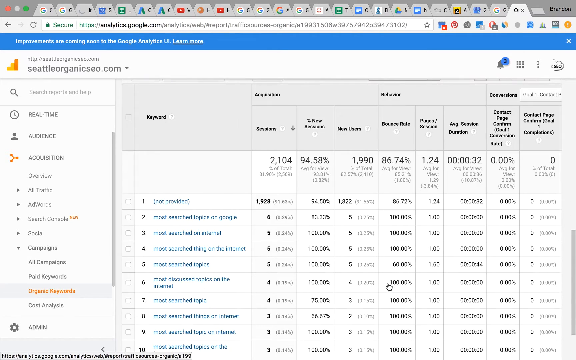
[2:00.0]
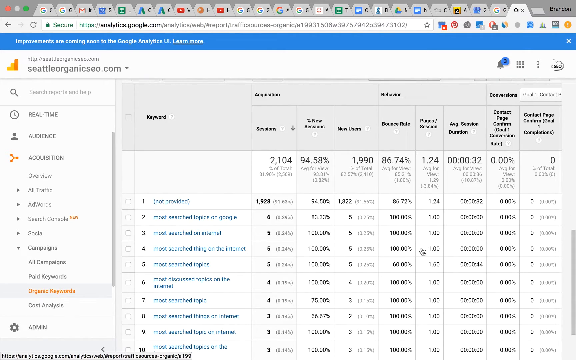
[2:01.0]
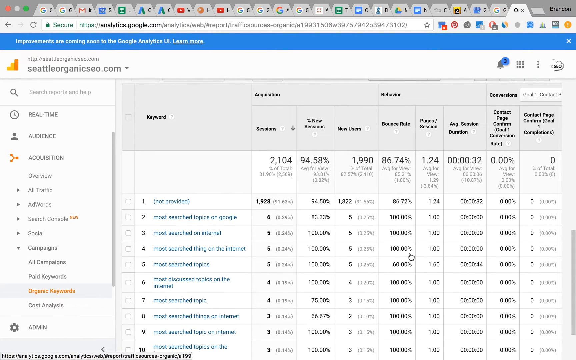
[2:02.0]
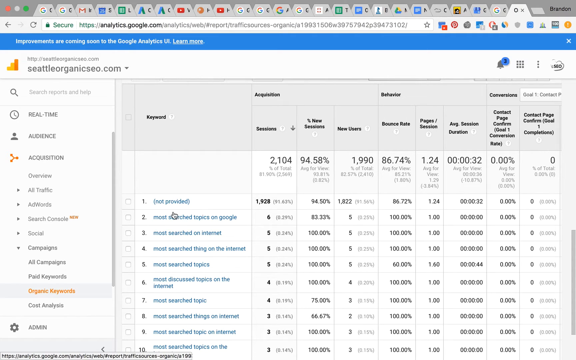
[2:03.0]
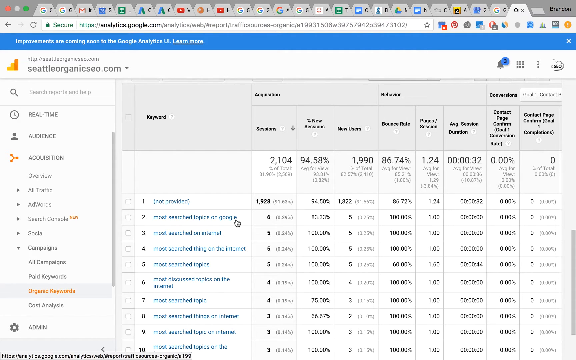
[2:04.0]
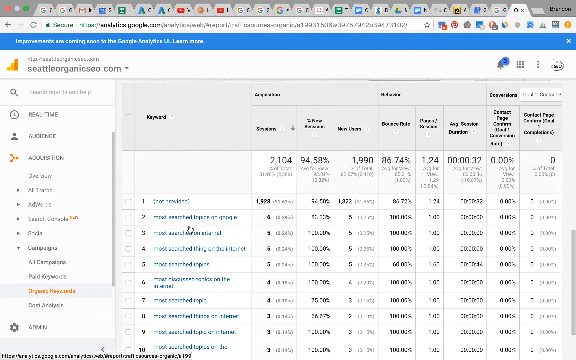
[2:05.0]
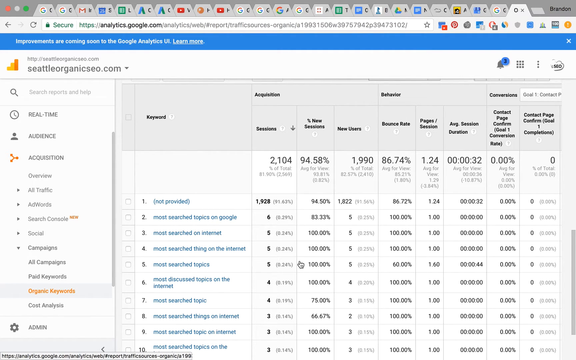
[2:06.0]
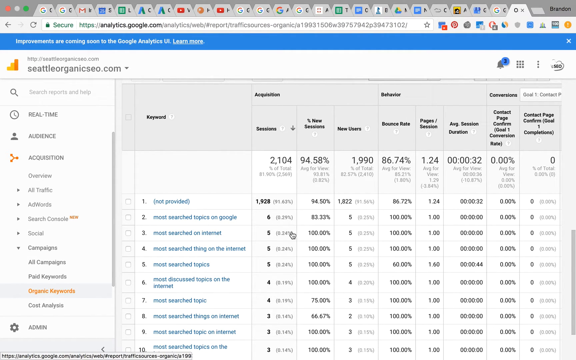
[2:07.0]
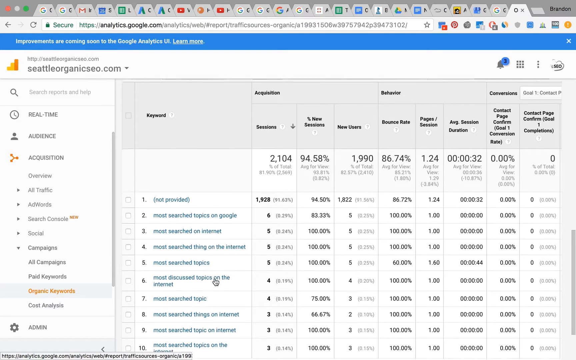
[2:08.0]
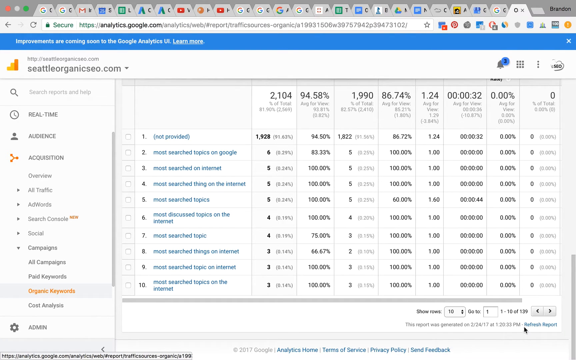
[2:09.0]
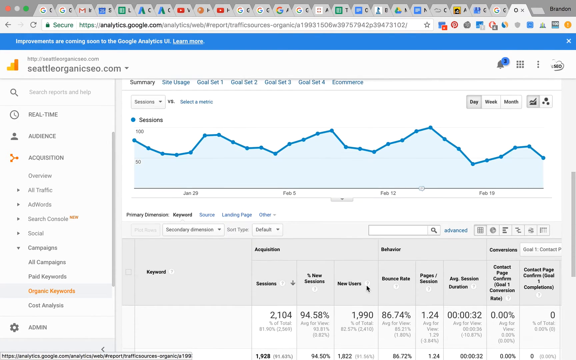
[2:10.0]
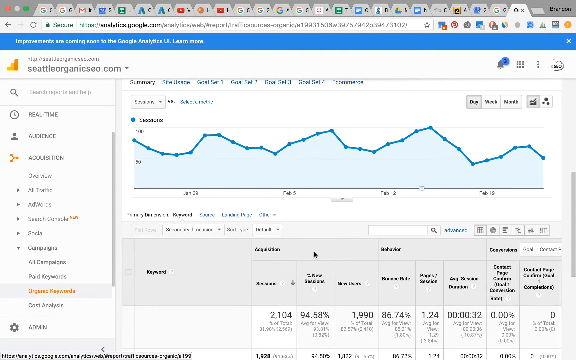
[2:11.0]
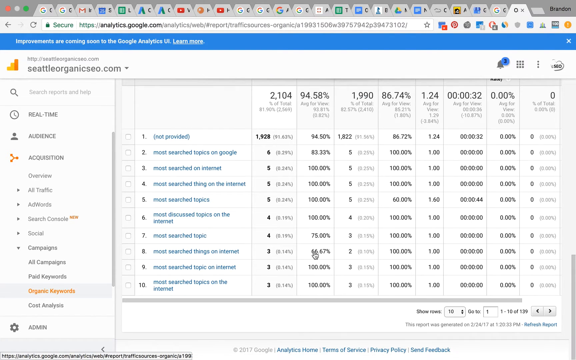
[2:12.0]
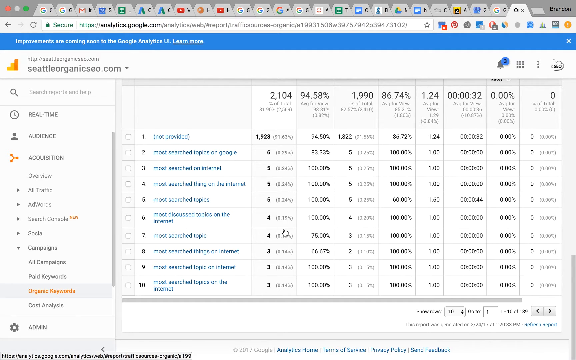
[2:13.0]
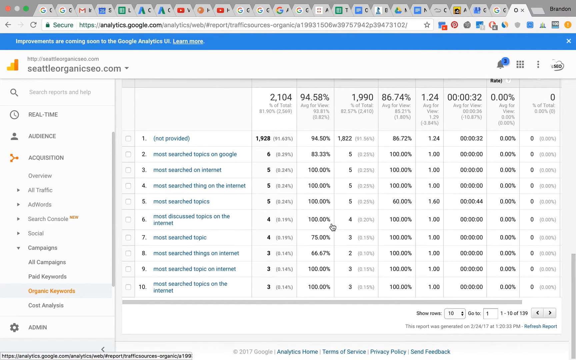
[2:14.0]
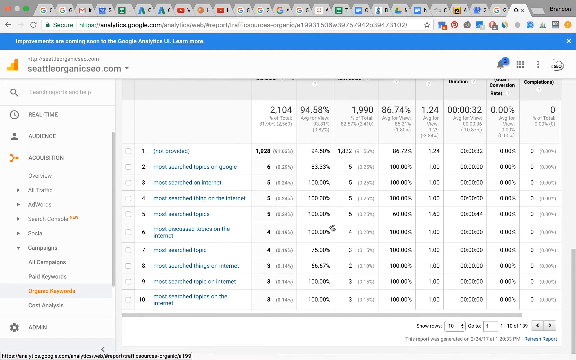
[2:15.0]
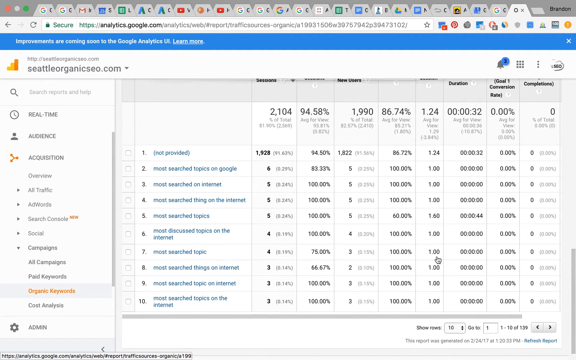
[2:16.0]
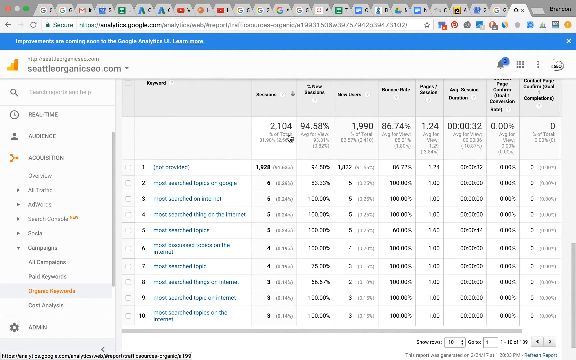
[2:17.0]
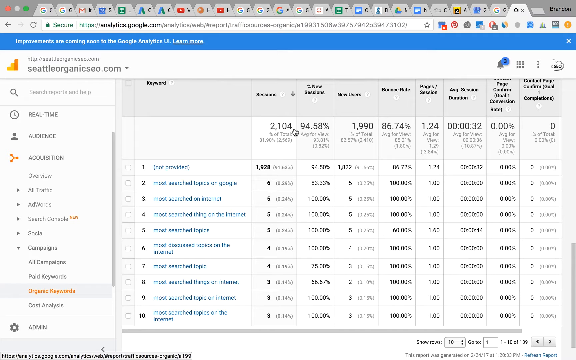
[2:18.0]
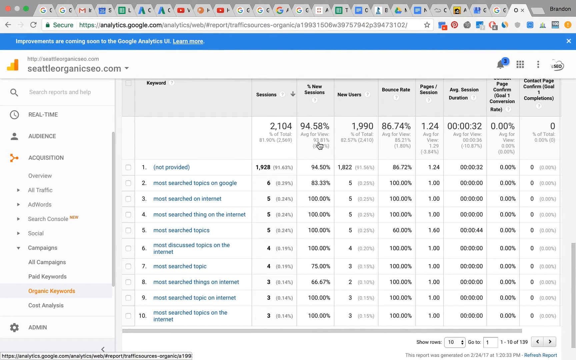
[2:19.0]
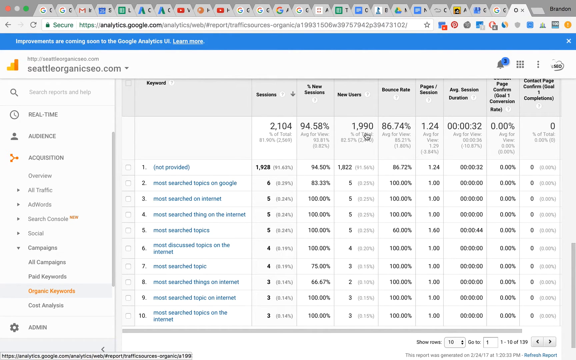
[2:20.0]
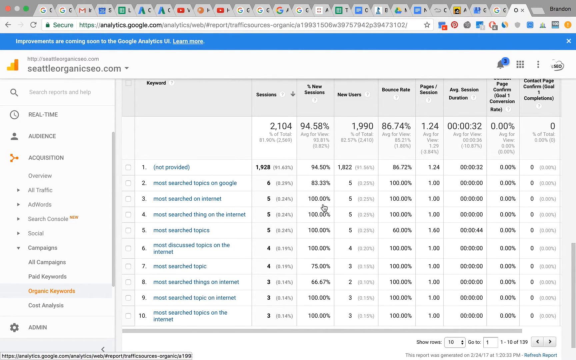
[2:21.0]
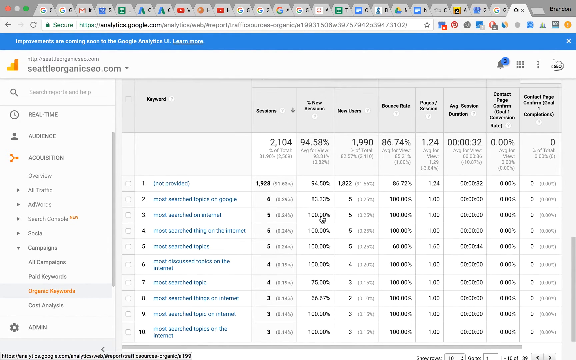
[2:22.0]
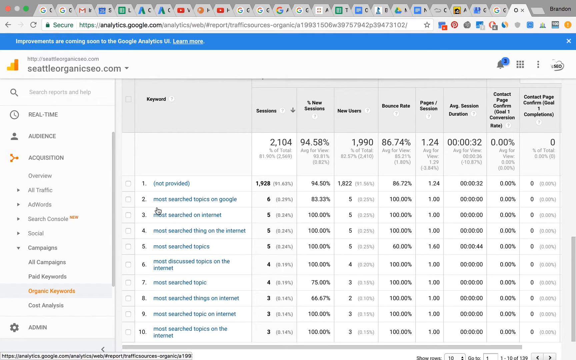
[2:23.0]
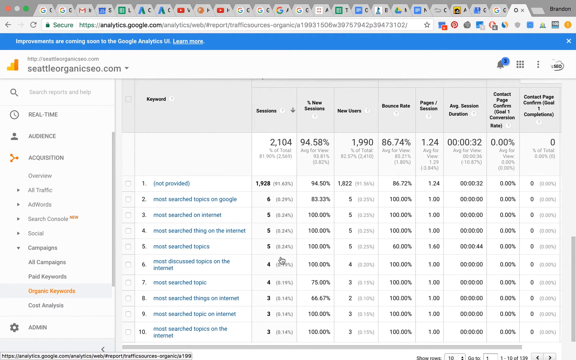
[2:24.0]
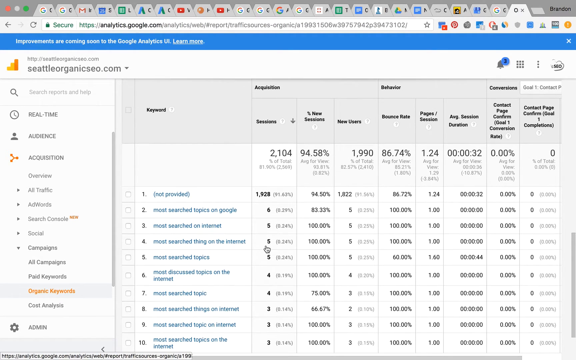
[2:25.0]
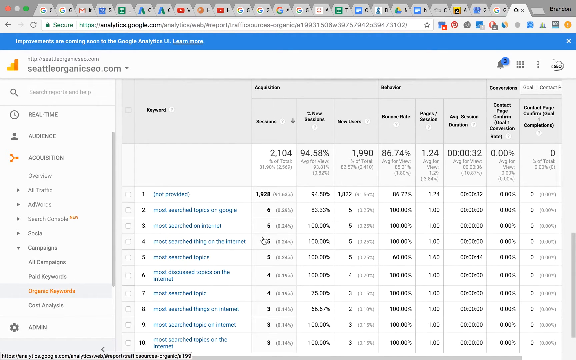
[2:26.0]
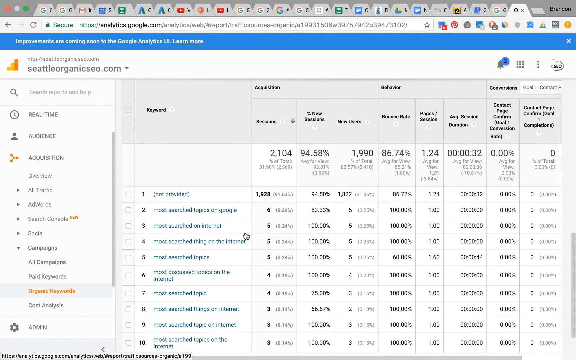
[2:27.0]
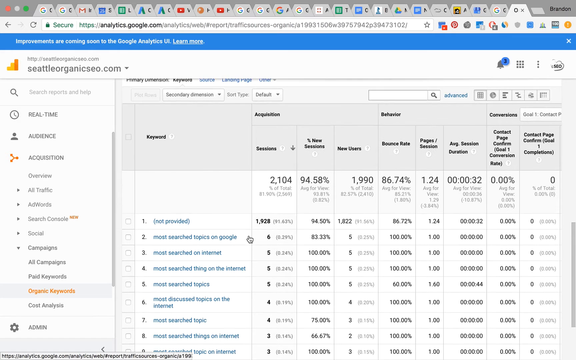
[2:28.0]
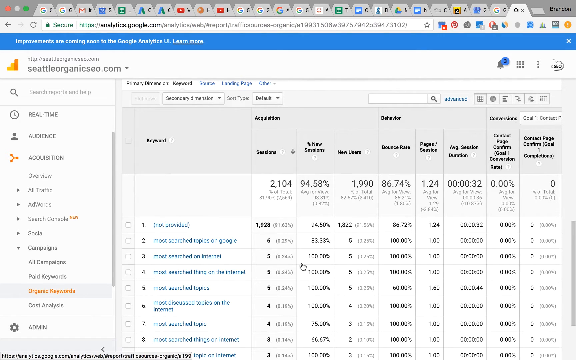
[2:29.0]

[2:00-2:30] A graph is pulled up on a computer, and a pointing-hand cursor with an extended finger scrolls up and down, apparently comparing numbers in the graph. Lots of numbers are visible as the cursor moves across the screen and scrolls up a little, seemingly searching for something to click. Above is what looks like a blue line graph. The page is for seattleorganicseo.com. Toward the left, but in the middle, an area says "keywords", and below it a list runs down the left side: number one says "not provided", number two "most searched topics on Google", number three "most searched on internet", then "most searched topics", then "most discussed topics on the internet", number seven "most searched topic", and number eight "most searched things on internet".